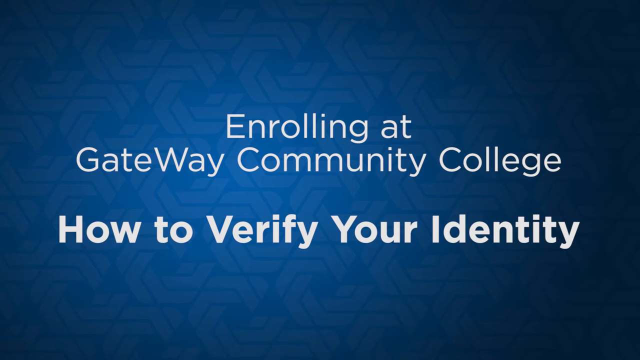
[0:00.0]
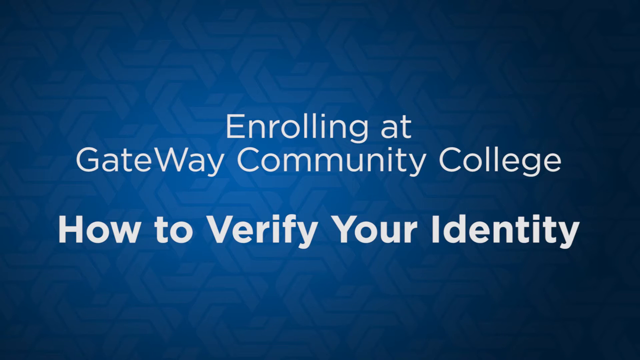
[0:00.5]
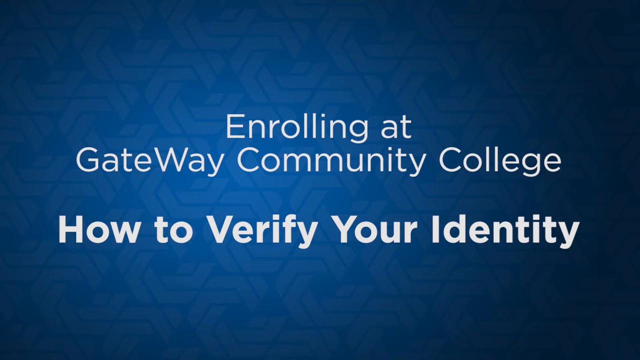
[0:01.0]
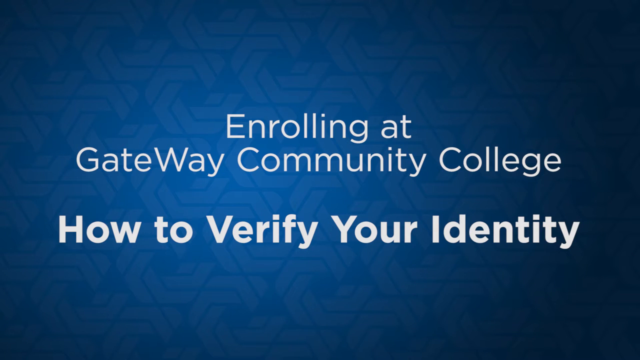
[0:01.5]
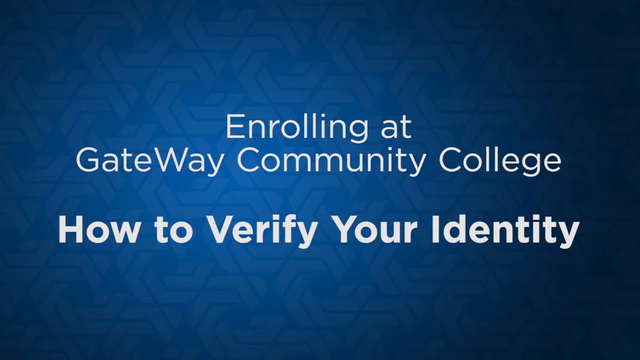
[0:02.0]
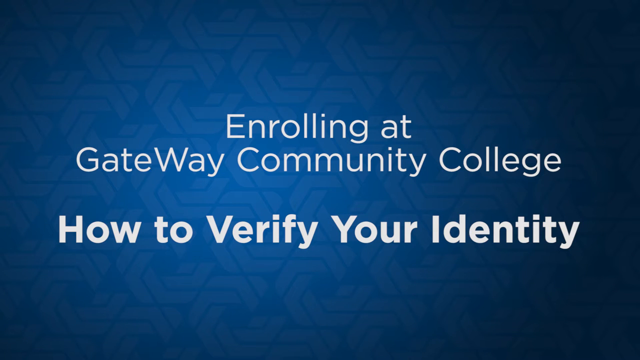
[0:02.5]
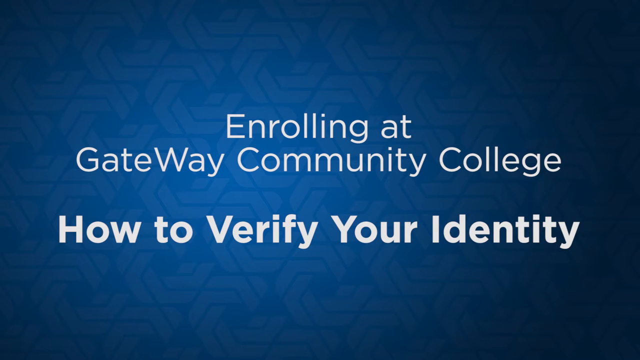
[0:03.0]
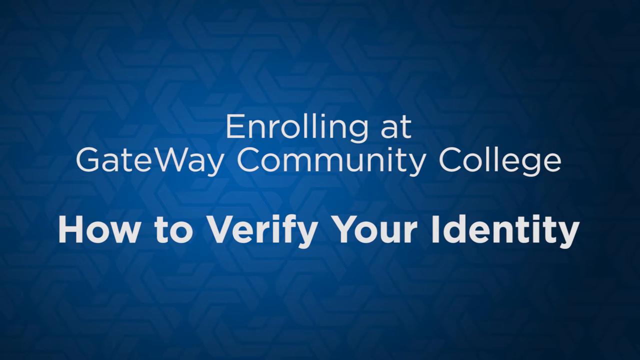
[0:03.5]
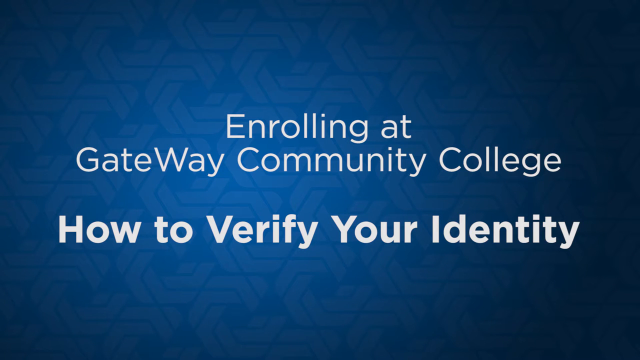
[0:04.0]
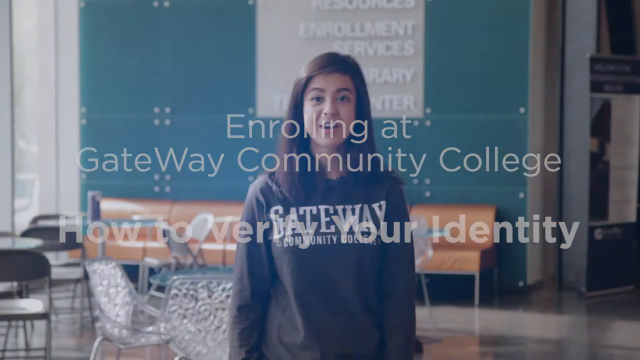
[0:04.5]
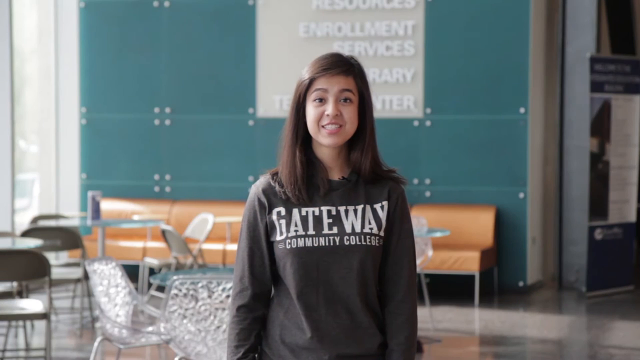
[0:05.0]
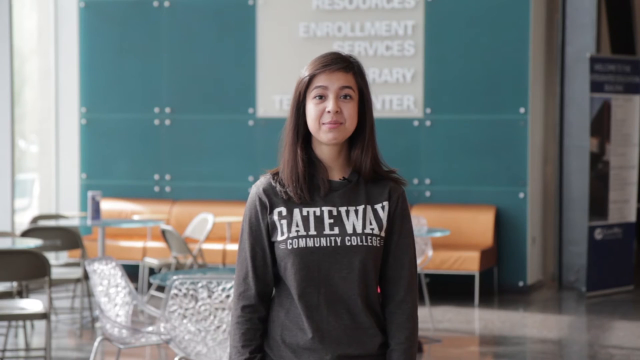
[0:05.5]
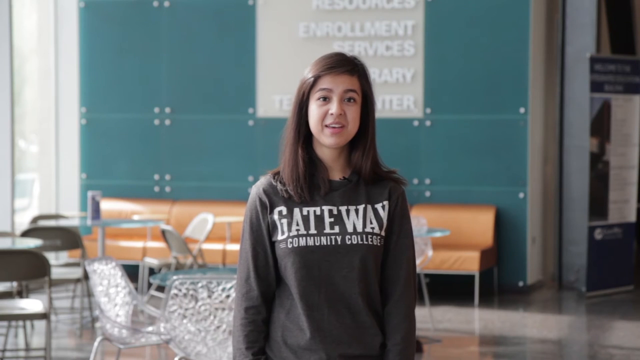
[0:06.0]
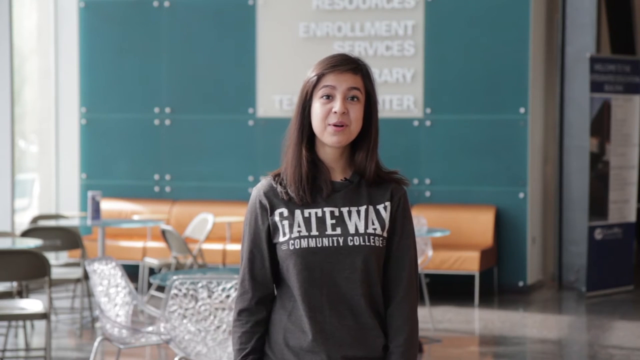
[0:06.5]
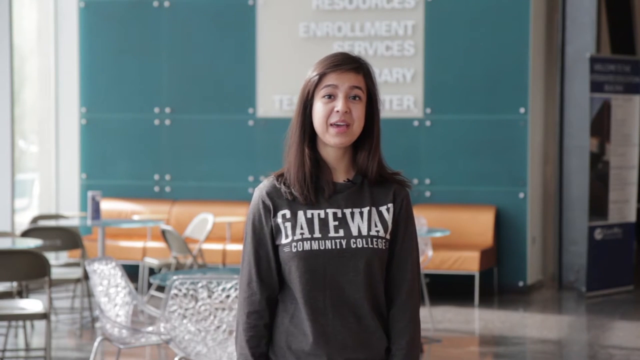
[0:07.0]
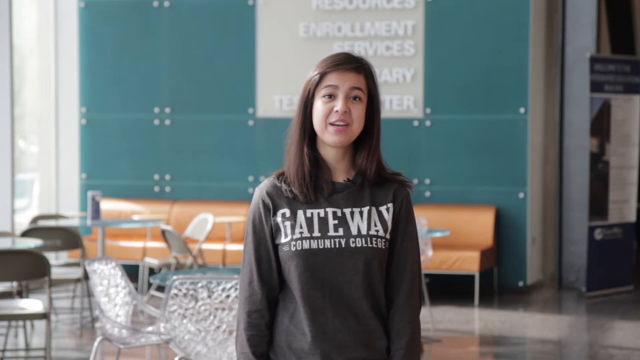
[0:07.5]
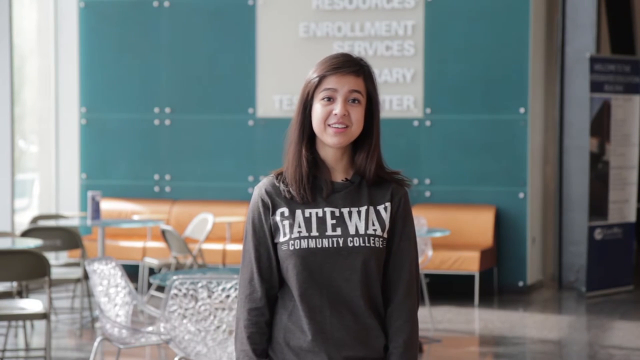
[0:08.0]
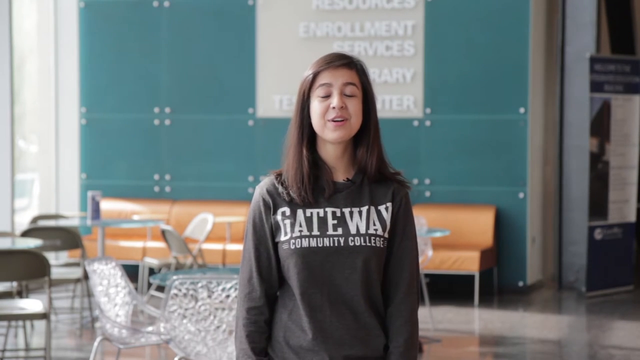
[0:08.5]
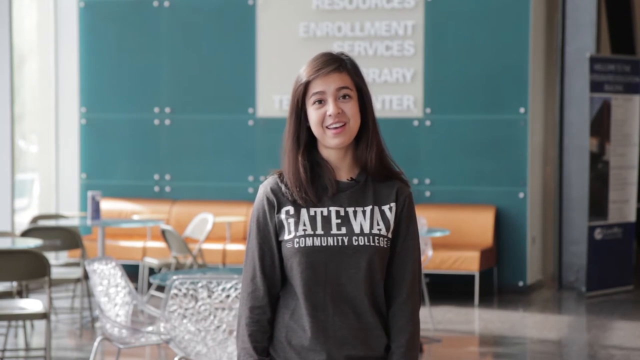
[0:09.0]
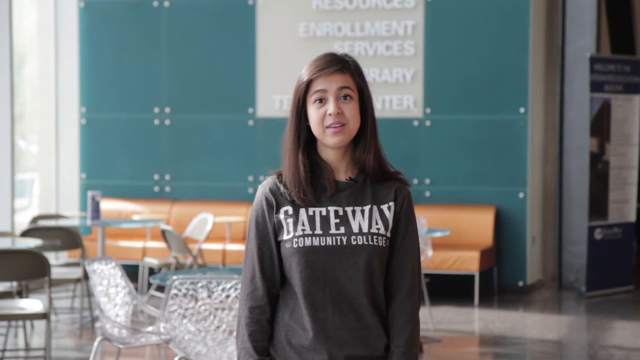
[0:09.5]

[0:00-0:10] The video opens on a blue background with arrow-like shapes in it, some lighter blue and some darker blue, and the background steadily gets darker toward the corners. White text reads "Enrolling at Gateway Community College", and bolder text reads "How to Verify". A young woman who looks to be about in her 20s then appears. She has dark hair and wears a black hoodie with the words "GATEWAY COMMUNITY COLLEGE" on it. Behind her is what looks like a lounge with a blue wall, a sofa and a table. She speaks to the camera.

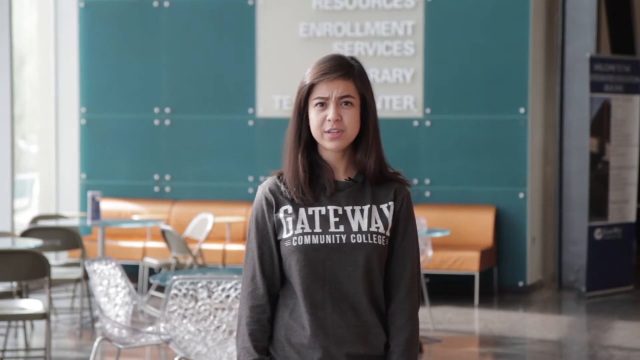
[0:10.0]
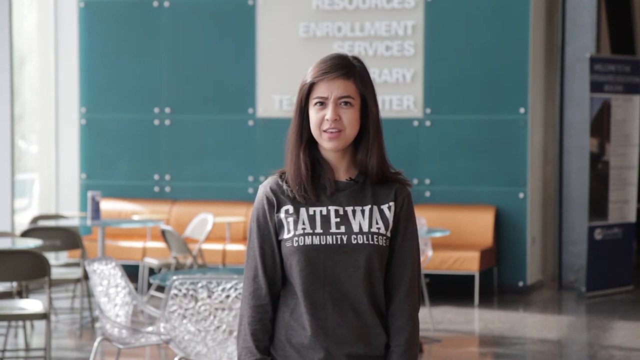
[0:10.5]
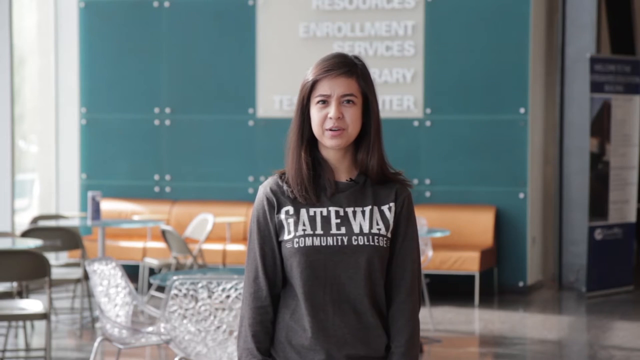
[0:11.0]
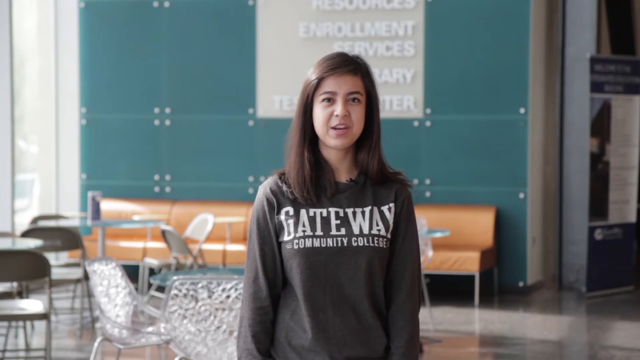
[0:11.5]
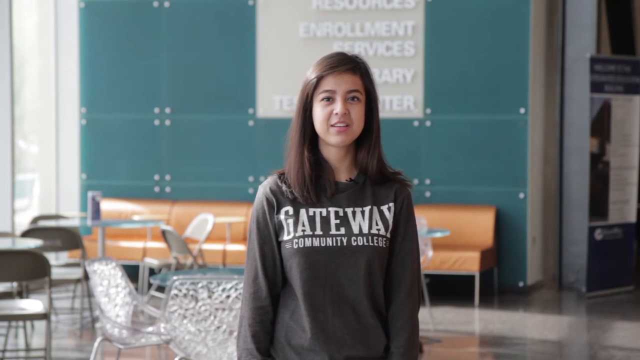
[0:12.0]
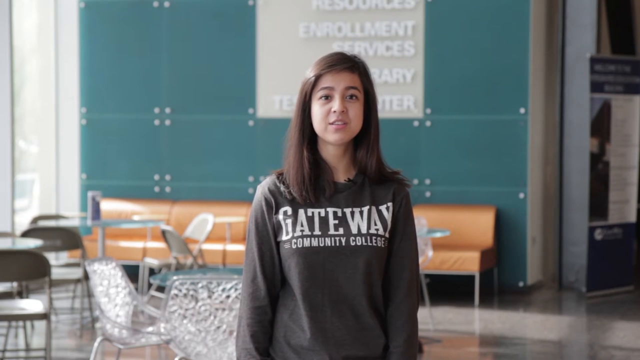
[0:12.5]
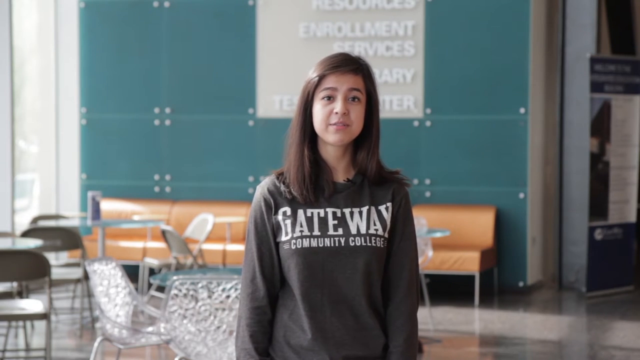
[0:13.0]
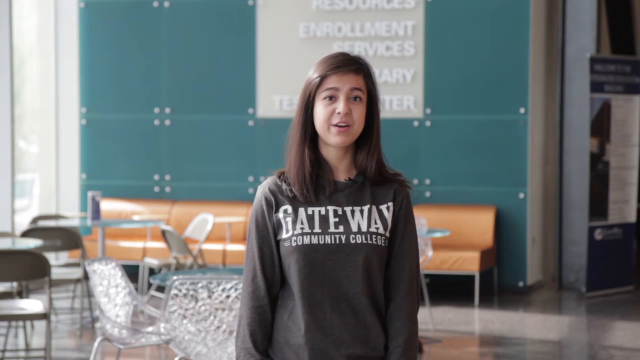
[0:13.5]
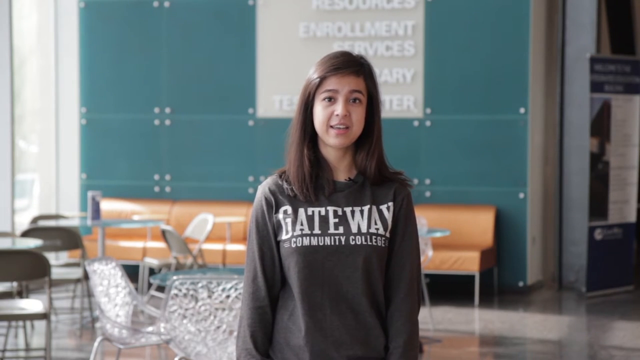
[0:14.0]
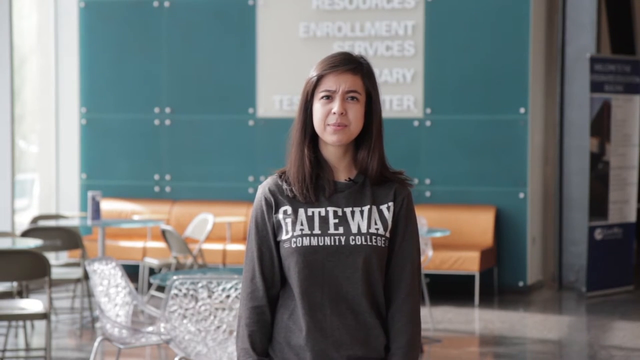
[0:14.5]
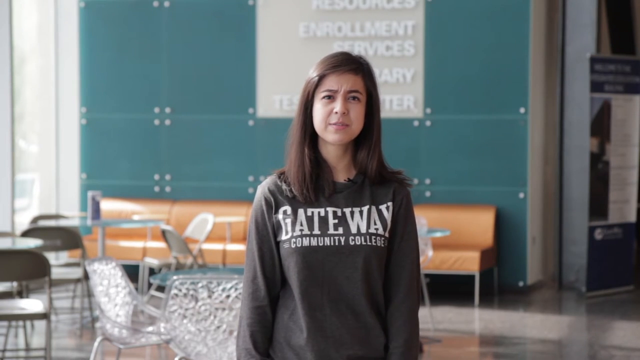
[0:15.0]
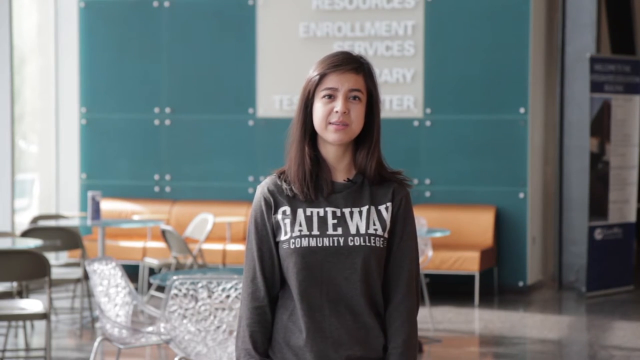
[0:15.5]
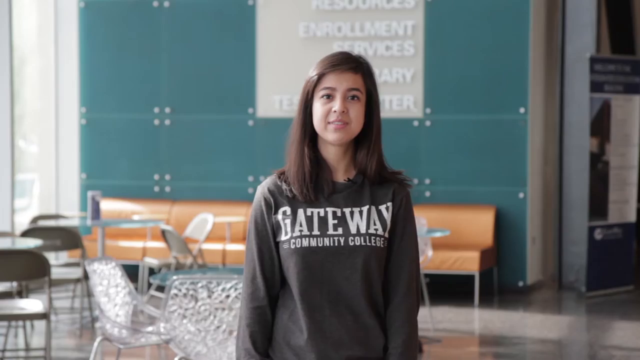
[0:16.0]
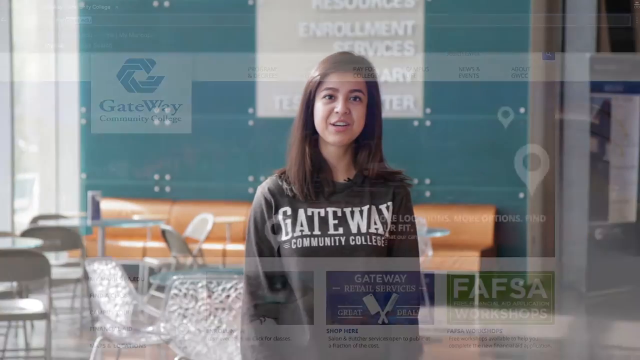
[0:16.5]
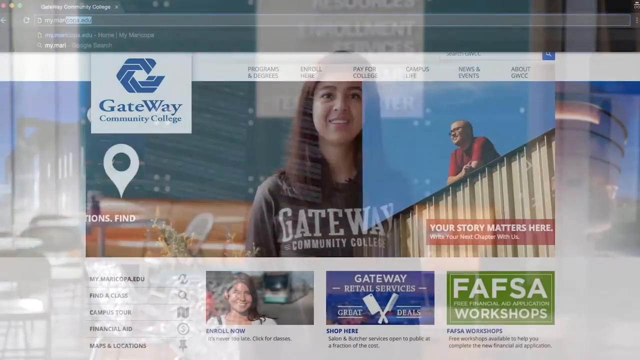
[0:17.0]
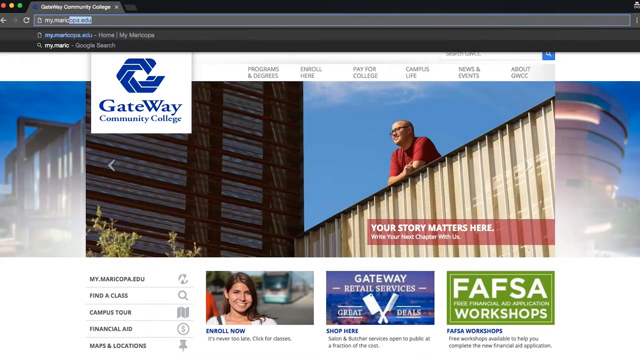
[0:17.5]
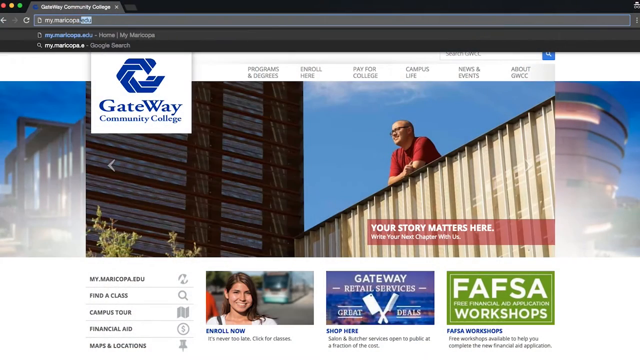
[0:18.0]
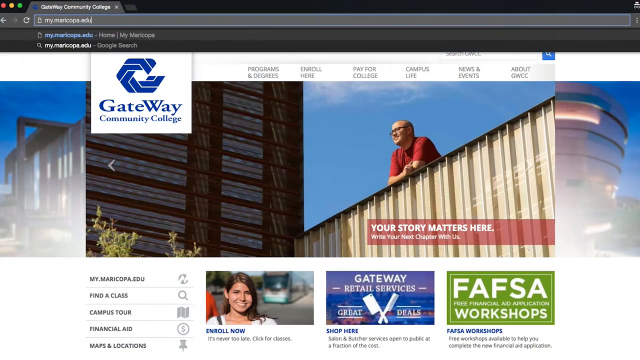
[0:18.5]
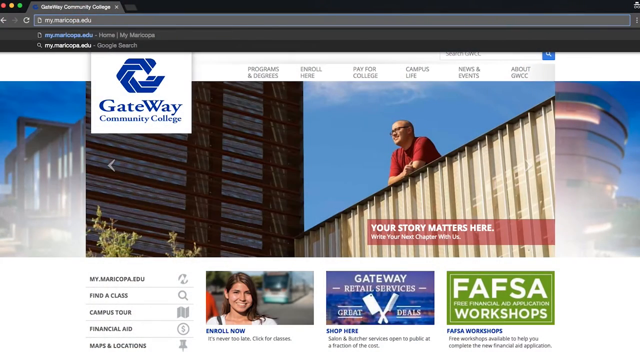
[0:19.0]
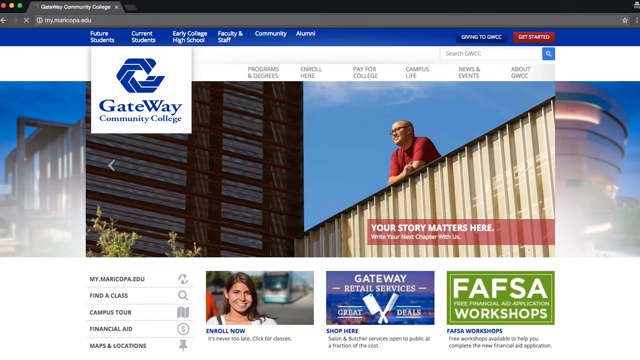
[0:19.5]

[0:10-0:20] A woman who looks to be in her 20s, with dark hair, wears a black hoodie that says "Gateway Community College". Behind her is a lounge with a blue wall, a silver plaque, a window, chairs, tables and a couch. She speaks to the camera, relatively seriously, and then smiles. A screencast of the Gateway Community College website follows. The website shows the logo and a picture of the campus with a man standing looking over it, along with several buttons for programs, enroll here, pay for college, campus life, news, and events.